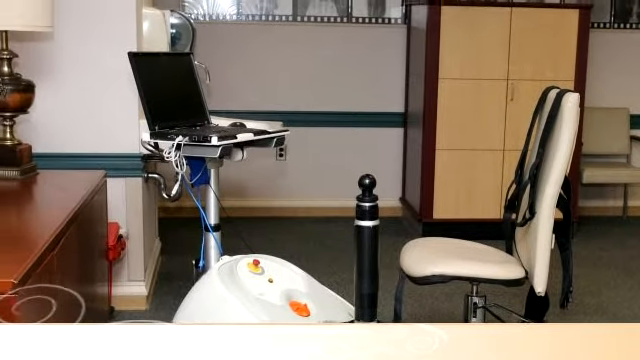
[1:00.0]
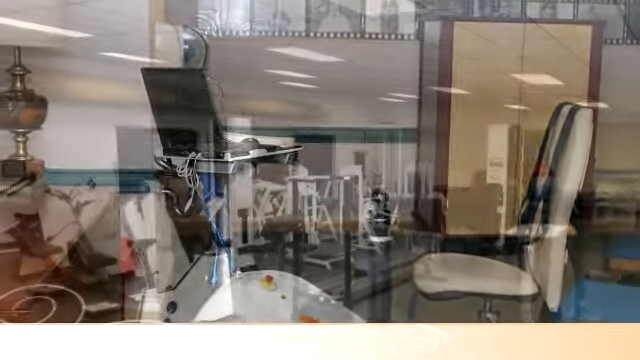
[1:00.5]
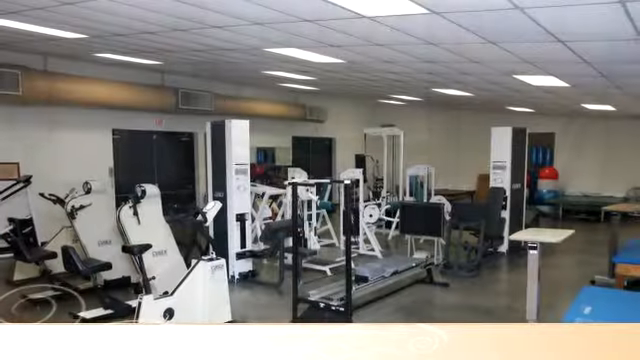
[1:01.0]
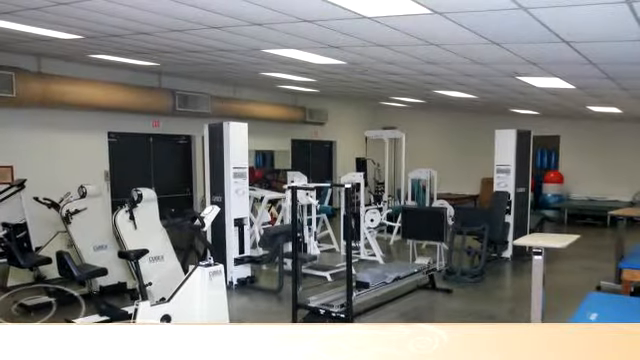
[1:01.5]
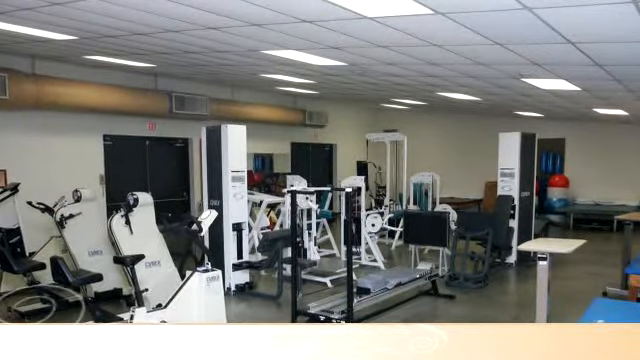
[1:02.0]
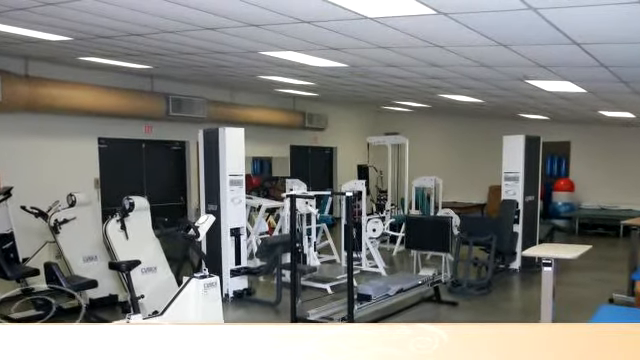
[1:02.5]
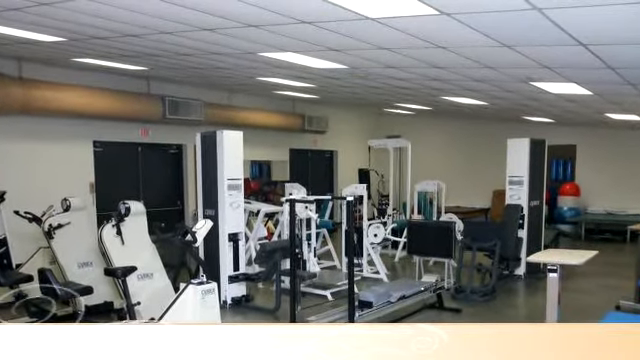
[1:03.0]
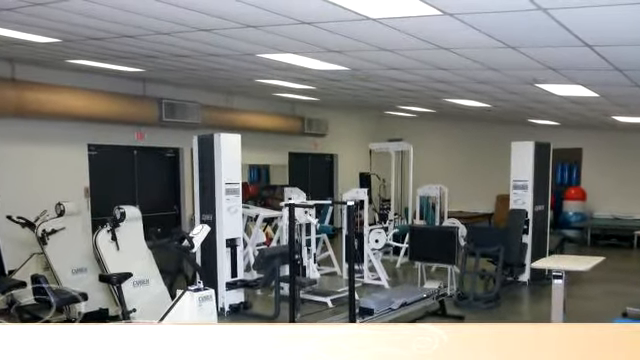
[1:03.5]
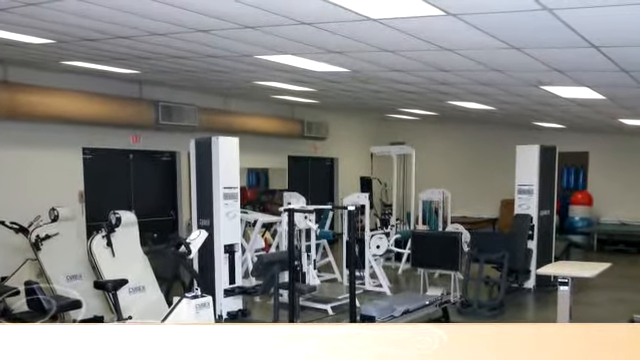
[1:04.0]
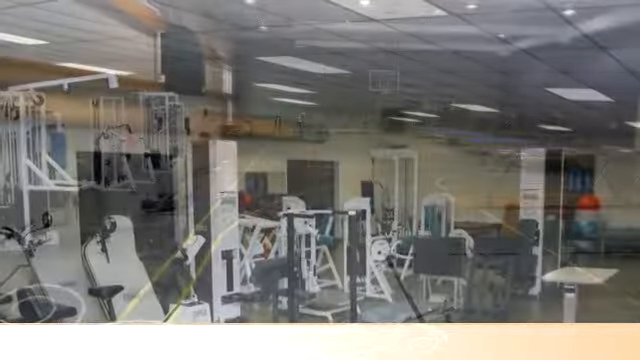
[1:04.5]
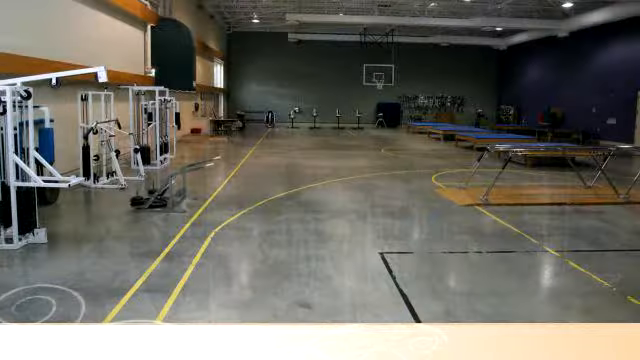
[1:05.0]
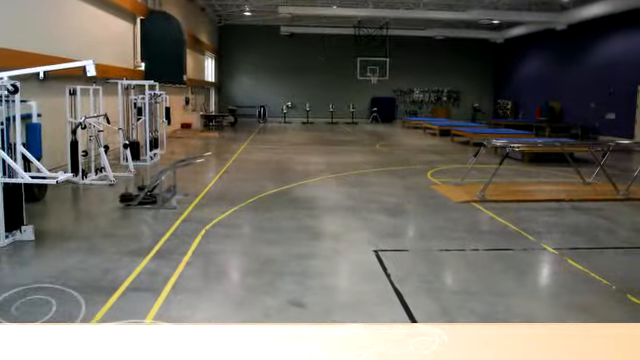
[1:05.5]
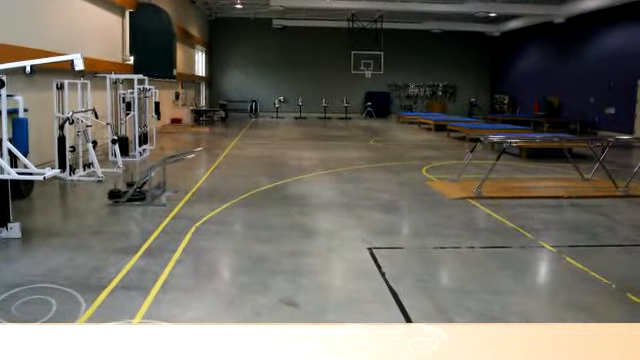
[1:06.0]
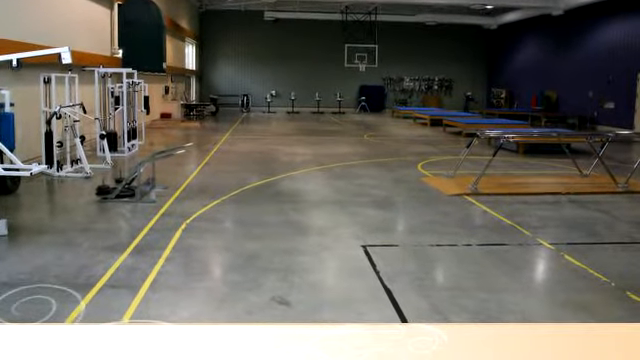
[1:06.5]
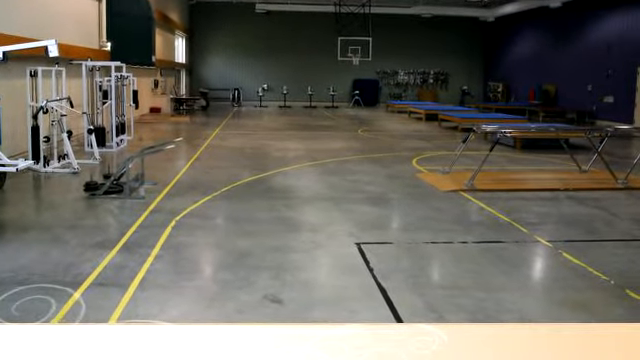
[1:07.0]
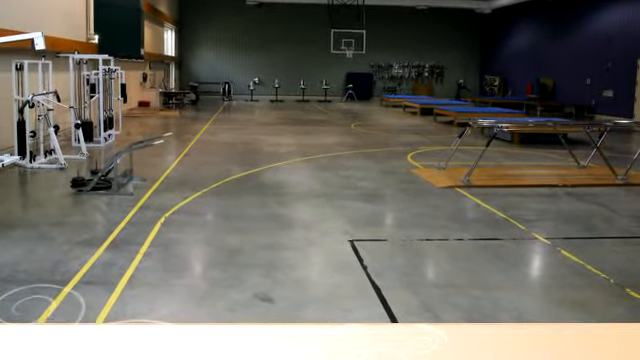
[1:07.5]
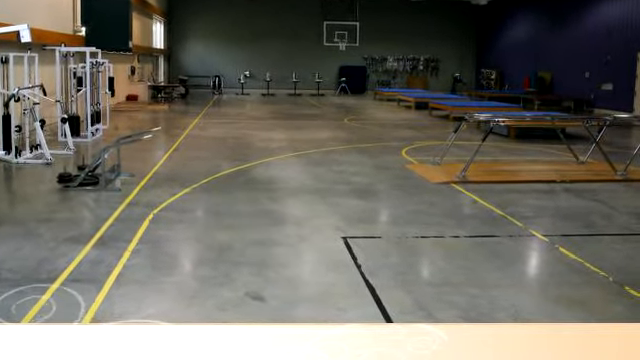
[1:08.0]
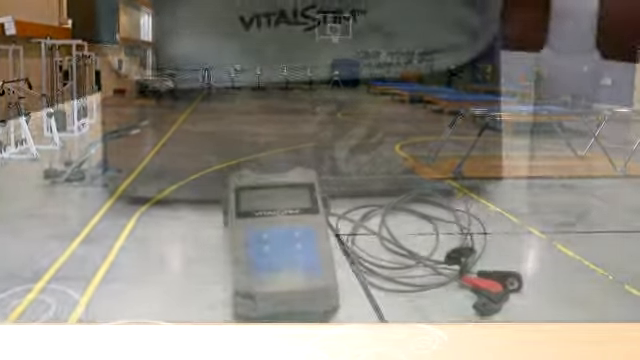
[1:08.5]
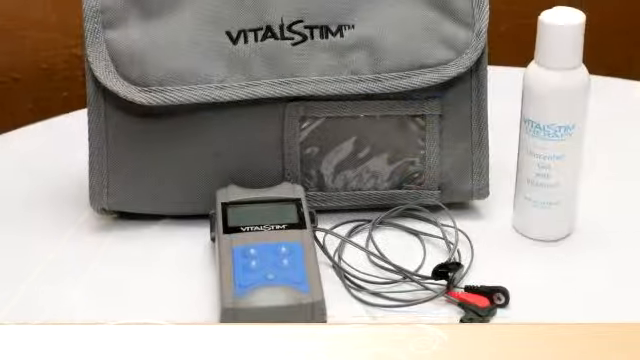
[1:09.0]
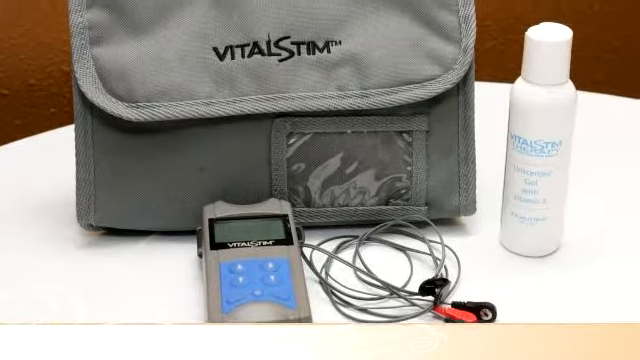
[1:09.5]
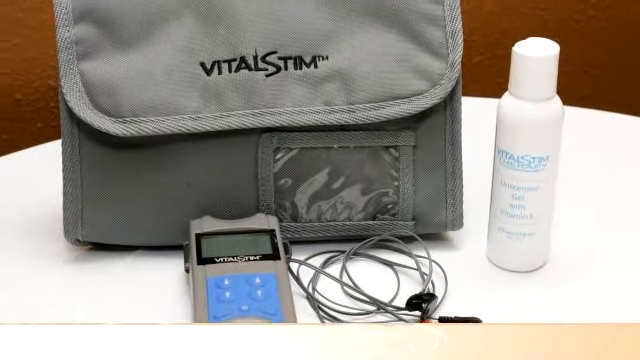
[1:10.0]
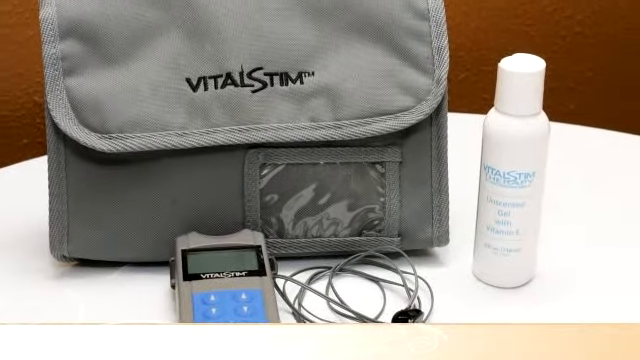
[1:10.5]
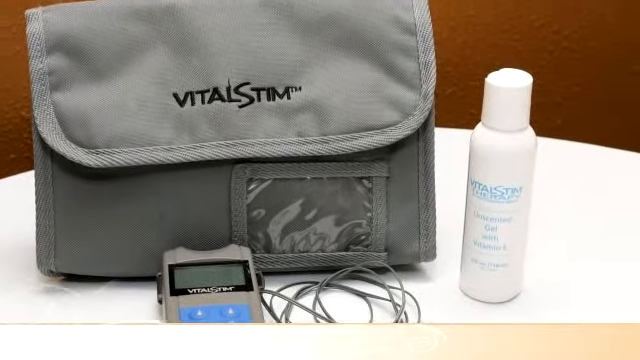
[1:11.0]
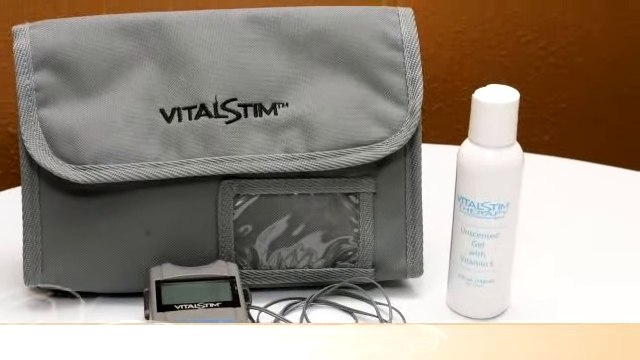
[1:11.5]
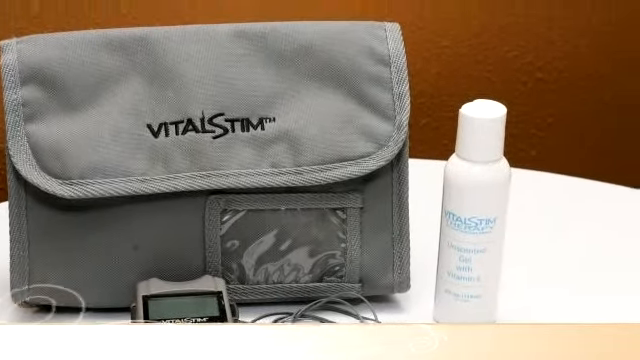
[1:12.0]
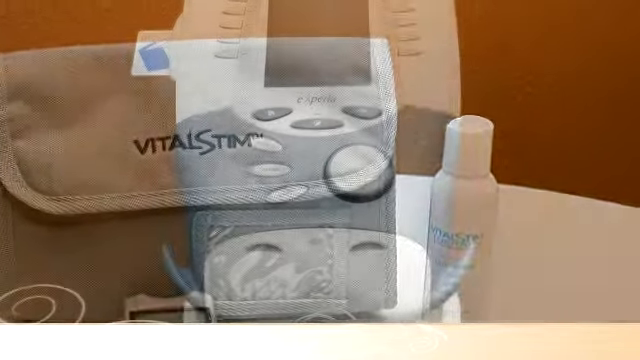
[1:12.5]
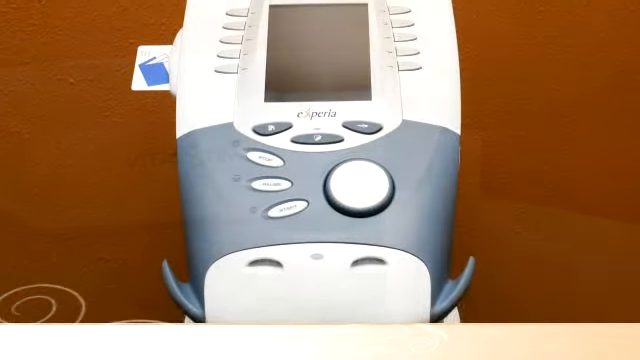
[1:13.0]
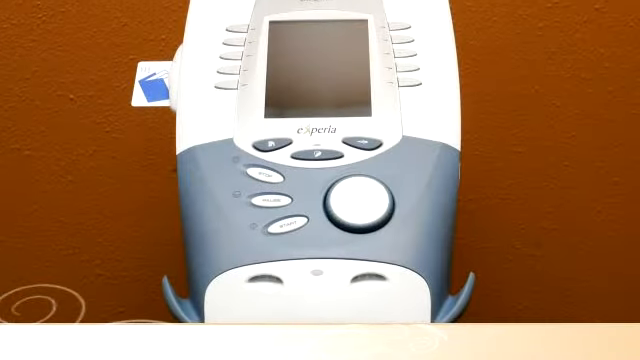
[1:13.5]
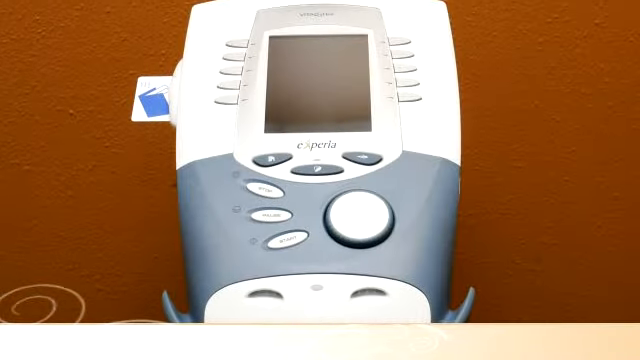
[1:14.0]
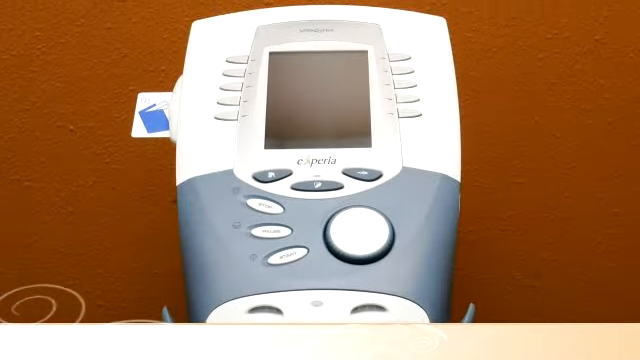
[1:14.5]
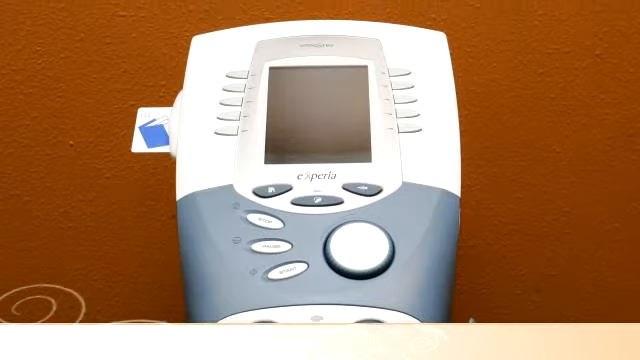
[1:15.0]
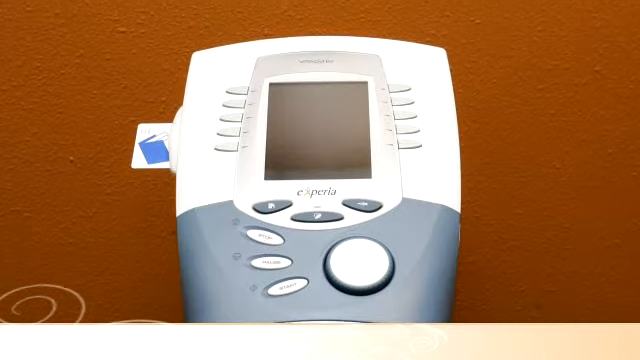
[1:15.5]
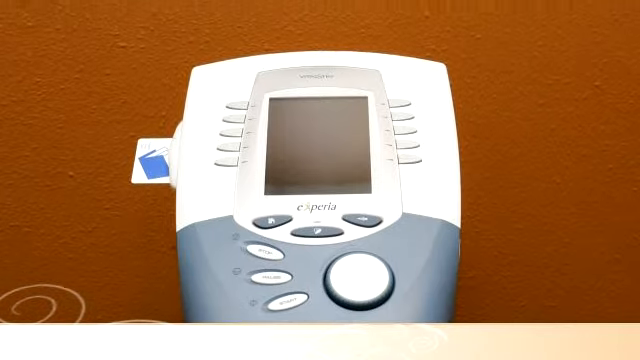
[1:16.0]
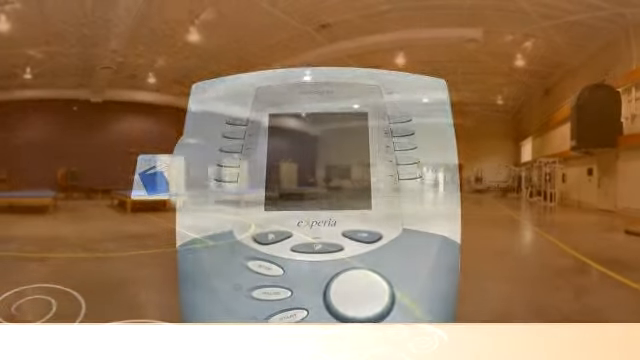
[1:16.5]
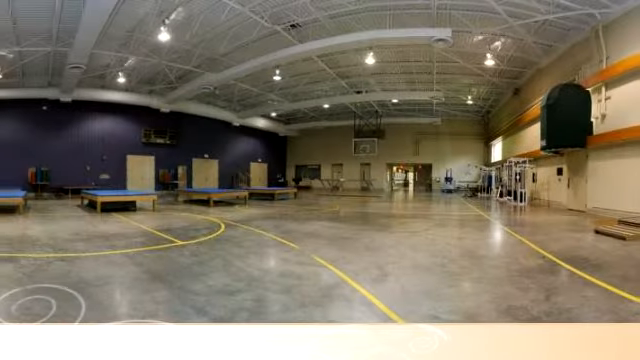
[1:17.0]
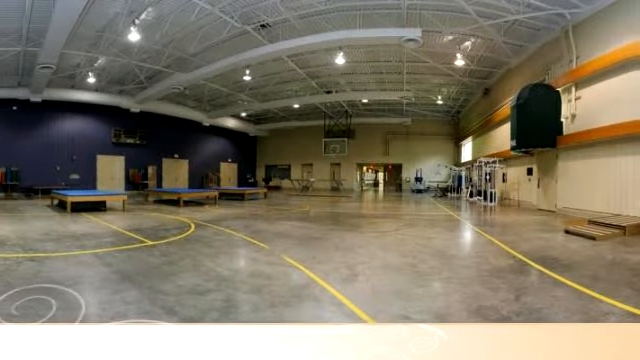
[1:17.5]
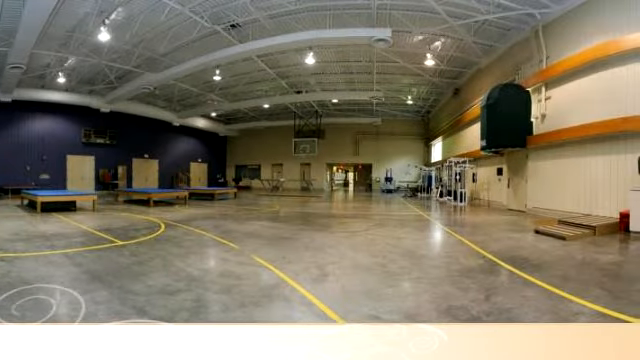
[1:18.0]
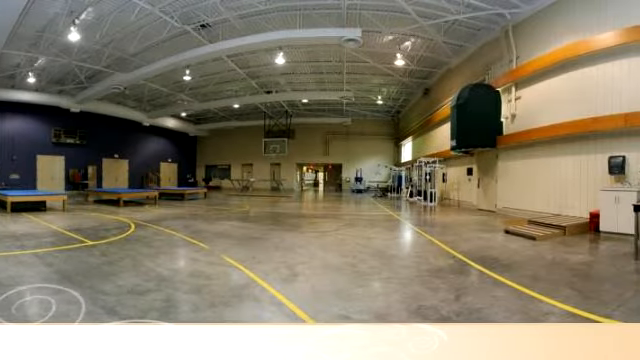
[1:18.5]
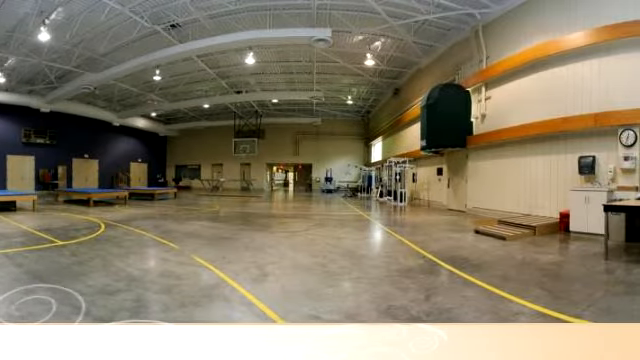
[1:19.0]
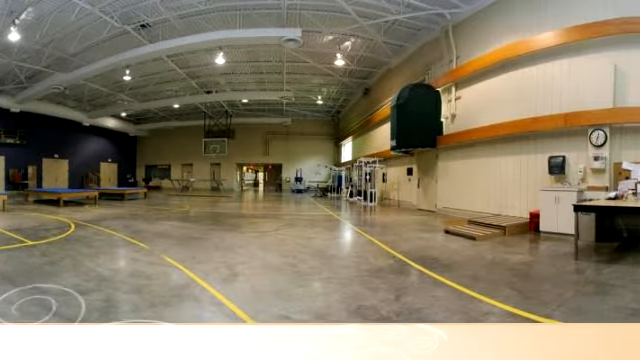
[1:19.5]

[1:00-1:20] More elements of the hospital are shown: a gym-style area with older equipment, all in white, including recumbent bikes, regular bikes, free weights and what looks like a Pilates reformer. Along one wall are banks of gymnasium-style doors, and in the back of the room another door might lead to another portion of the room. Zooming back out reveals it is the same room as the therapeutic tables. At one end is a basketball hoop, and the floor is painted with the grid for a basketball game. The camera zooms back in on an individual piece of equipment: a gray tote bag it is kept in, reading "Vital Stim"; a white bottle reading "Unscented Gel with Vitamin E, Vital Stim Therapy"; the handheld stimulus device itself, gray with blue buttons on the front; and a black wire or cord with the sensors for the device. The camera then pans up and out to a different handheld device reading "Xperia"; it is not switched on, so its purpose is not clear. The video then phases back to a full view of the gymnasium.